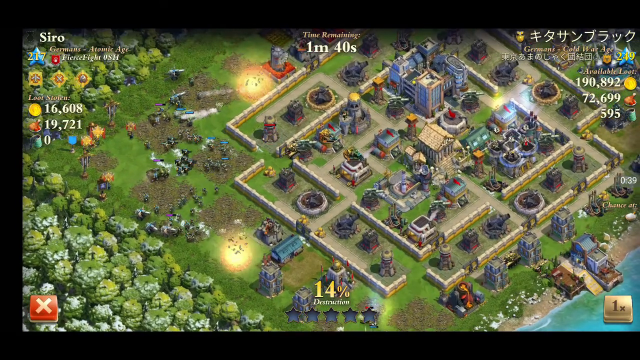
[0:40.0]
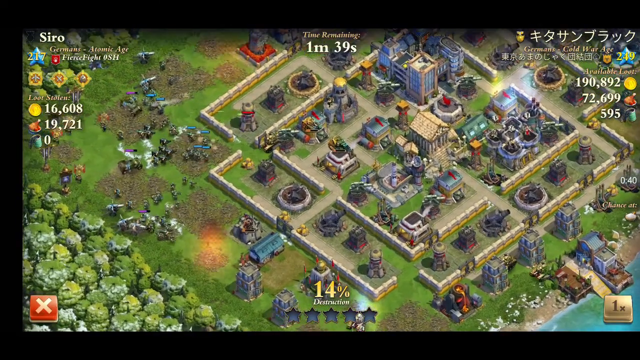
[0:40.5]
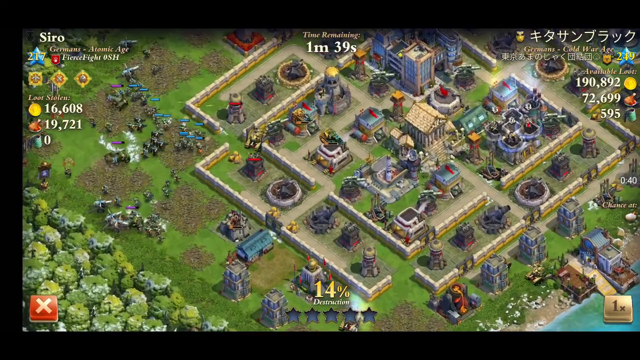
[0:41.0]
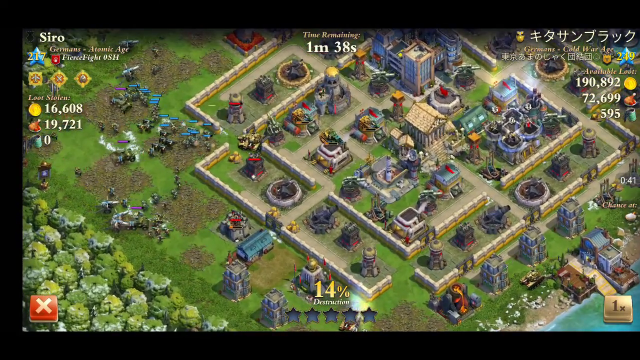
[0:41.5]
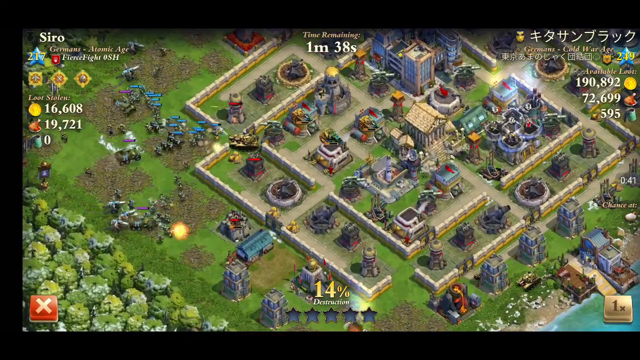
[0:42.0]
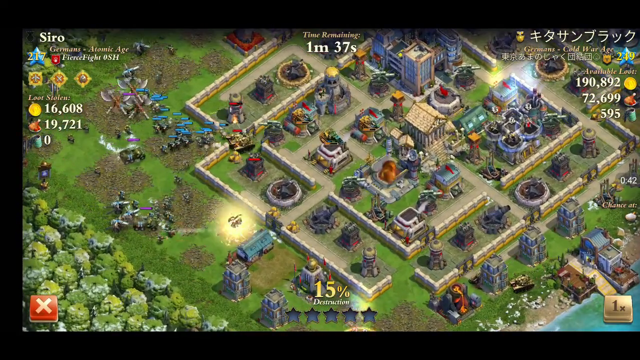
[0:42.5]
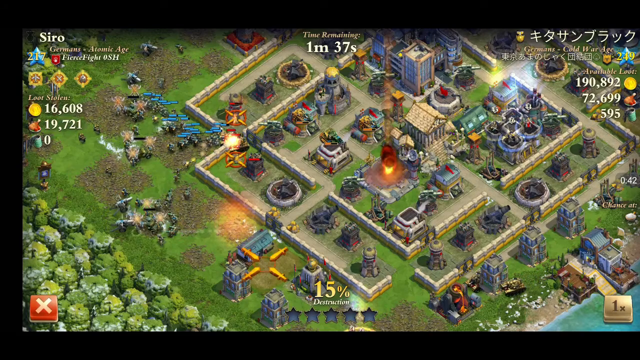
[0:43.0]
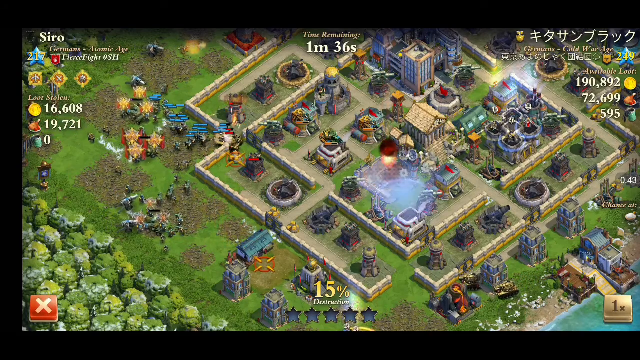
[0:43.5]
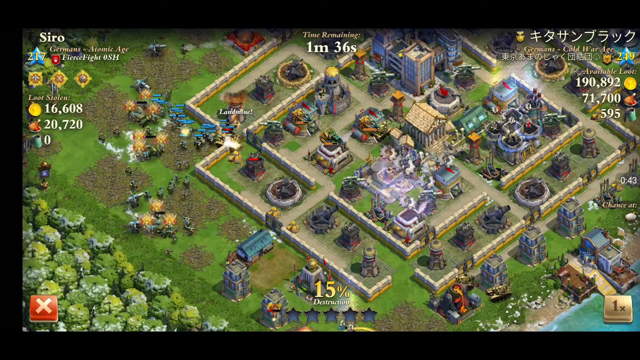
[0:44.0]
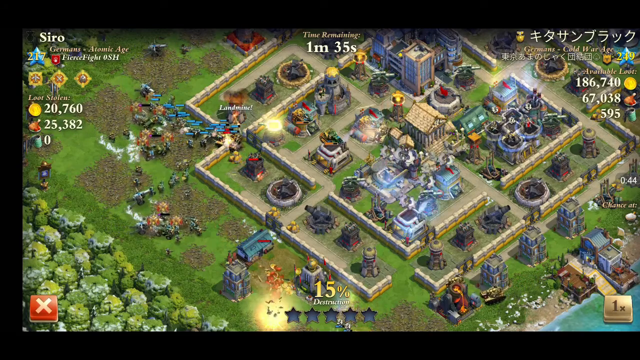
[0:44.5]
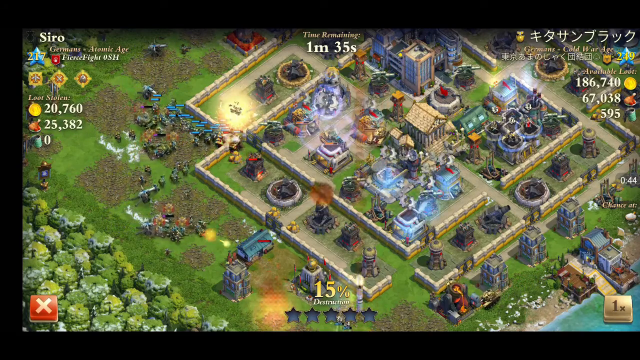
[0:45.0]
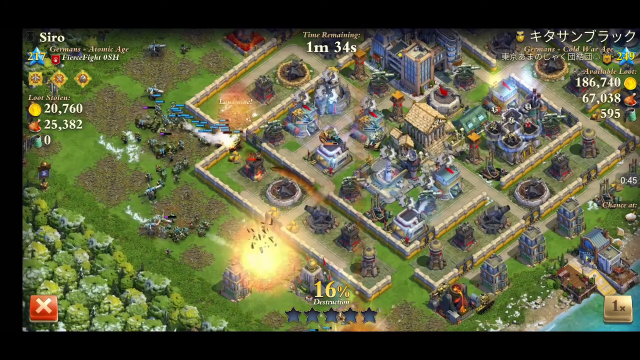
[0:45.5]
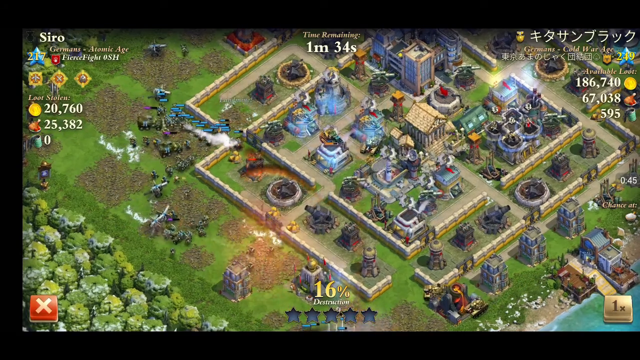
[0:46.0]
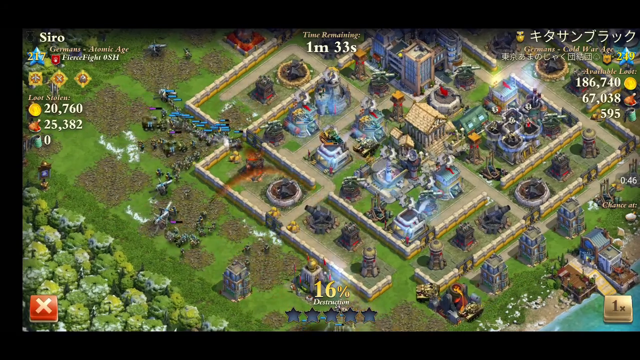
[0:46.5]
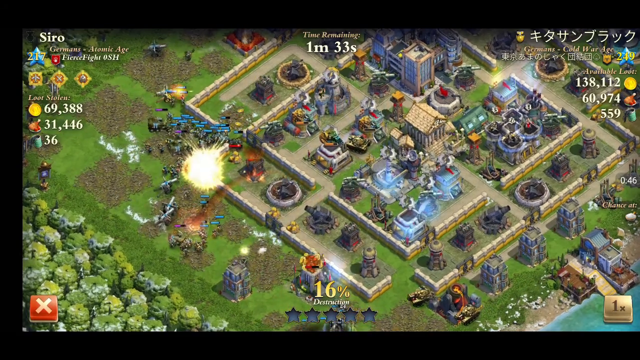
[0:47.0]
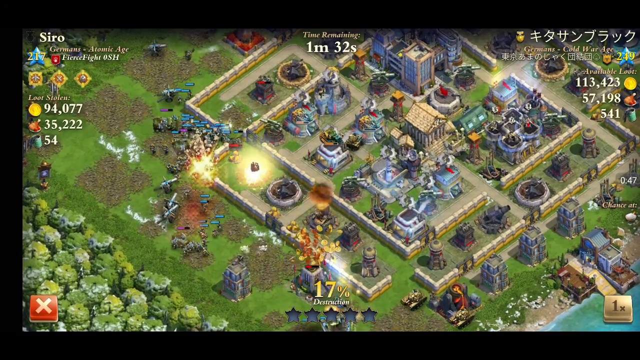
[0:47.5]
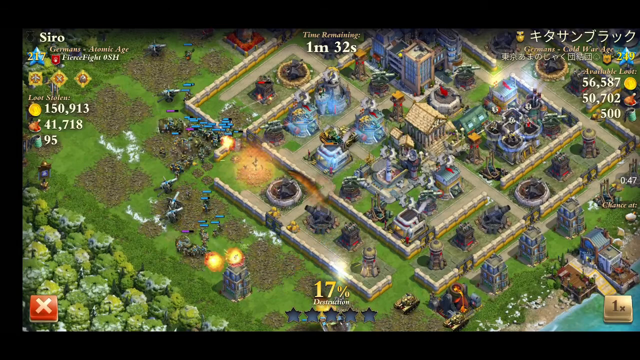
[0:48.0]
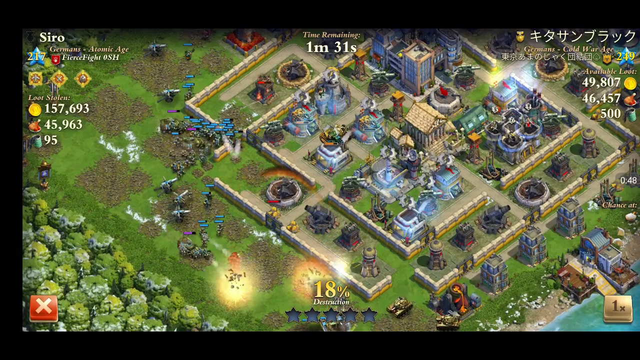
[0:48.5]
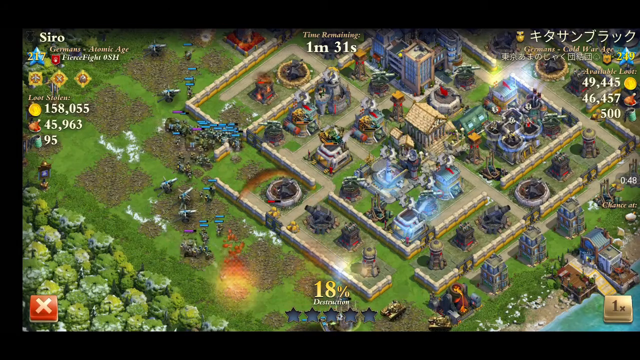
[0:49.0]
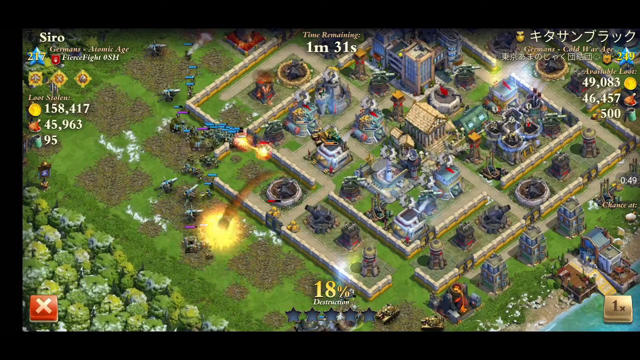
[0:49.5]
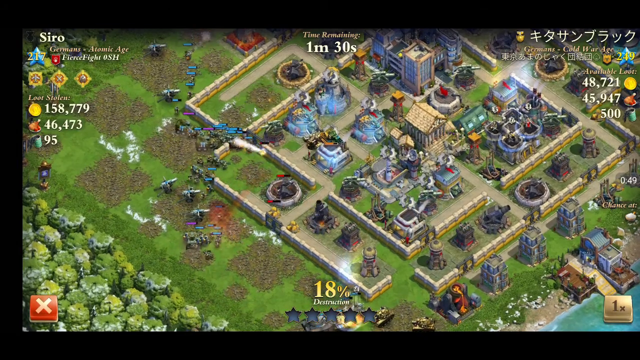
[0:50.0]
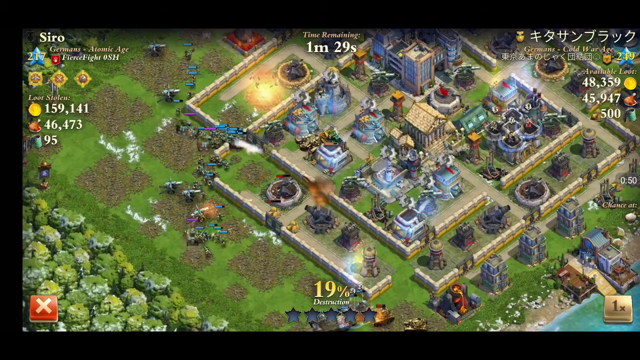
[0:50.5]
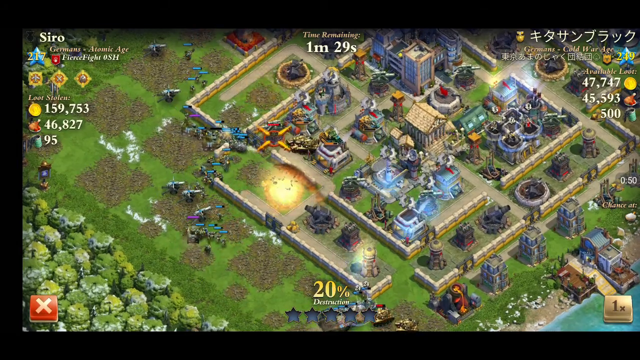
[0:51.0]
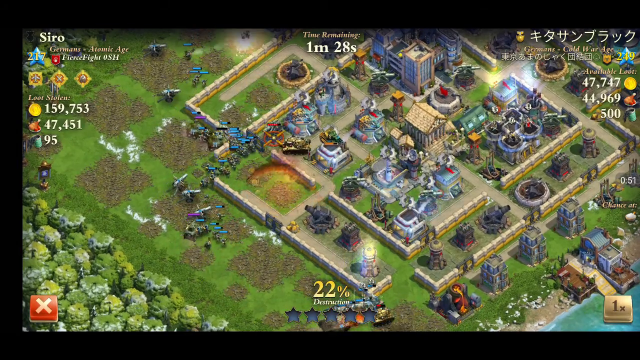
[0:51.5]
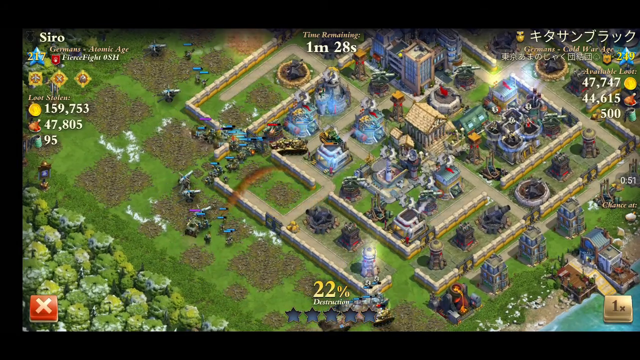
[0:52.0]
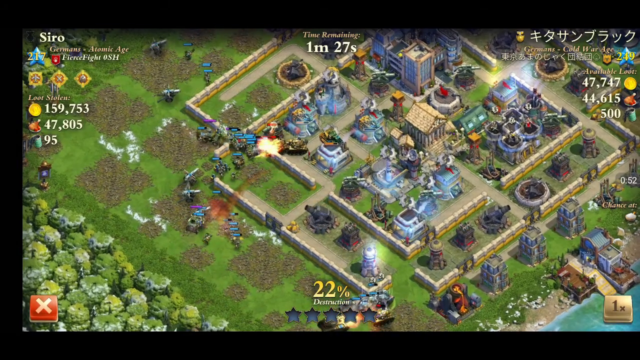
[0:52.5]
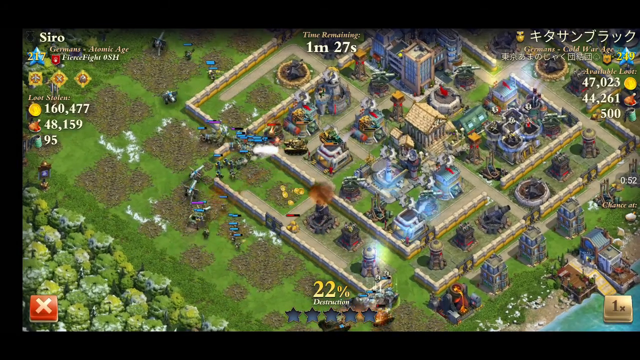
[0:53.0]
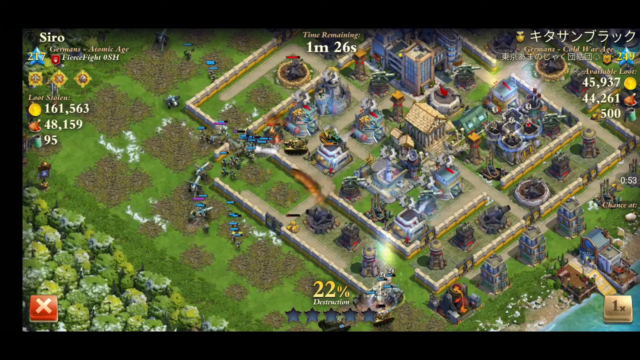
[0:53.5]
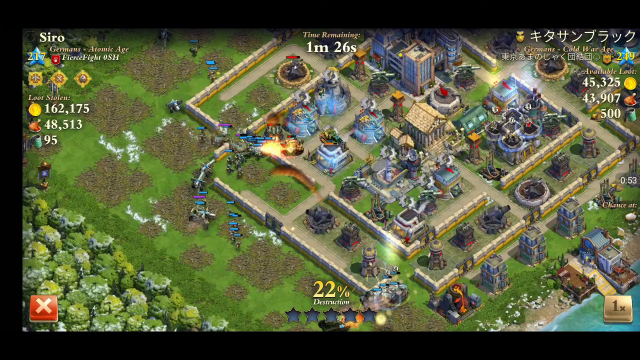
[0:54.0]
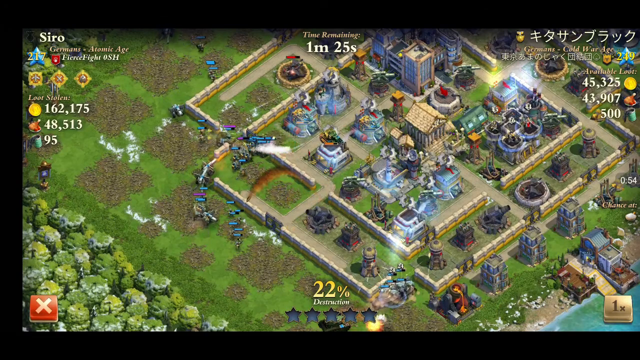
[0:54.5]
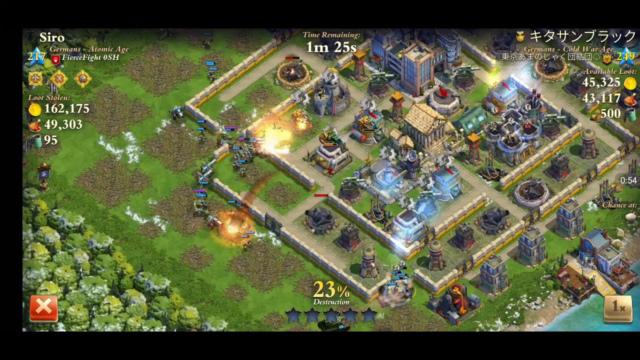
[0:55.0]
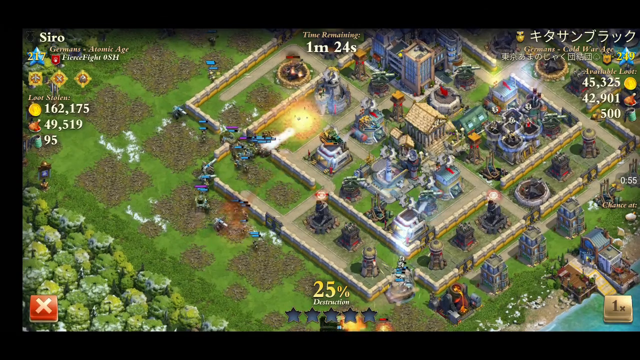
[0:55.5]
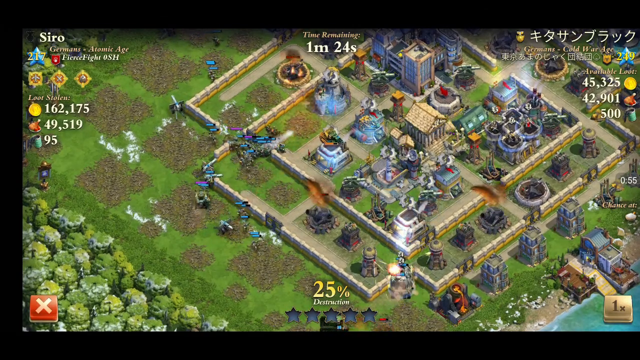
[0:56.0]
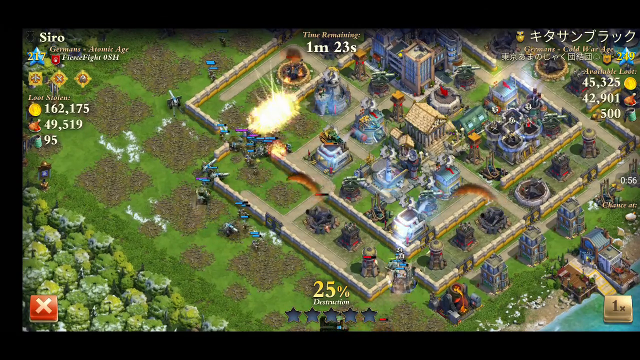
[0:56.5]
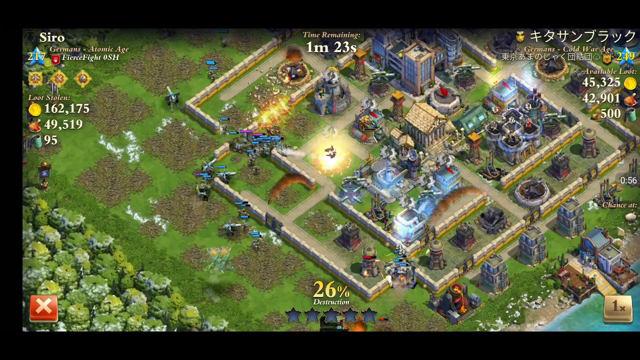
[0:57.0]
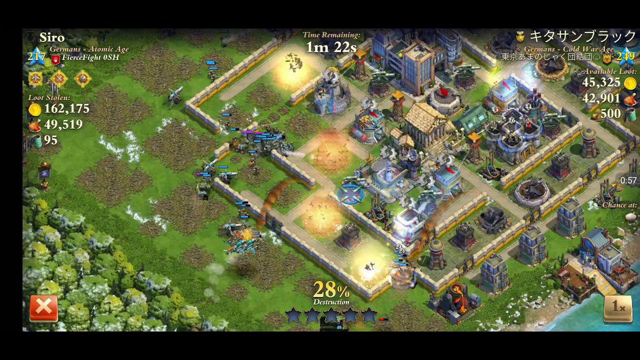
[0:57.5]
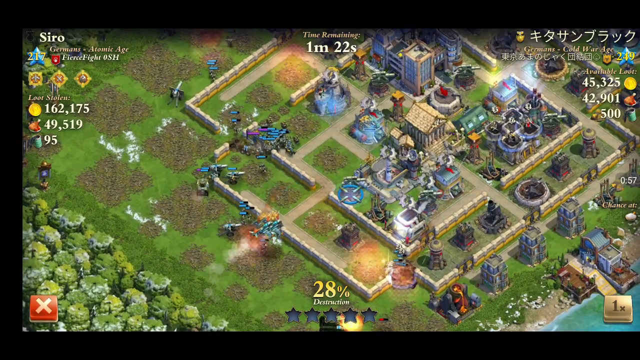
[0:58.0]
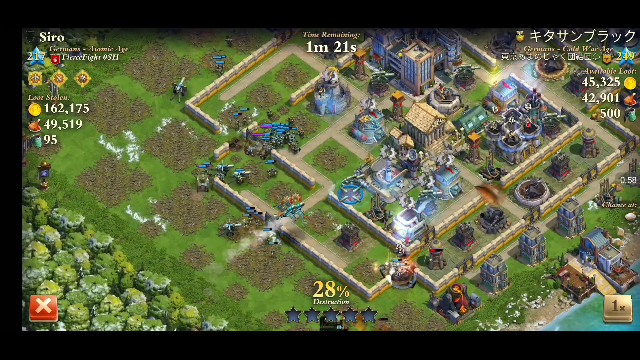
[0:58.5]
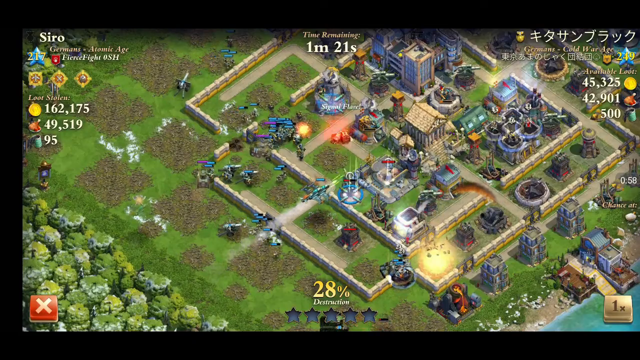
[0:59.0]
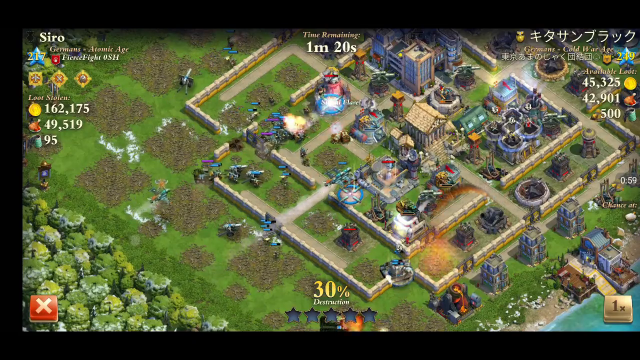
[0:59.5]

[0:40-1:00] The attack is going well, reaching 14% destruction within roughly the first 20 seconds, and the figure steadily rises. The attacking troops seem to be making their way into the center of the defending player's settlement quickly. An ability appears to have been used, bringing airstrikes in from planes. The attacker seems to be getting a lot of resources and has stolen quite a bit of loot. By the end of this section about 25% of the base has been destroyed and the attack continues. The attacker does not seem to have taken many losses and seems to be doing much more damage than the opponent. Quite a lot of defense structures are in place, but the defending player does not seem to have much infantry or tanks to defend with, and many of the defense structures are being destroyed without putting up much of a fight.